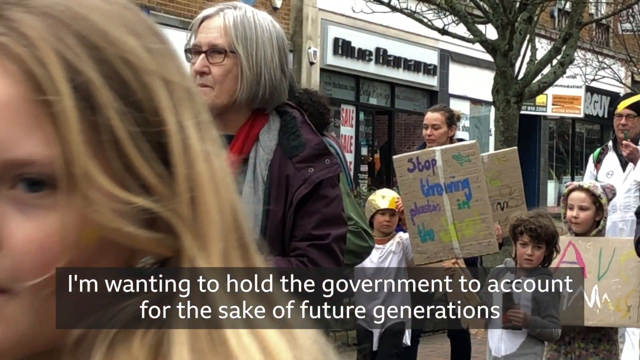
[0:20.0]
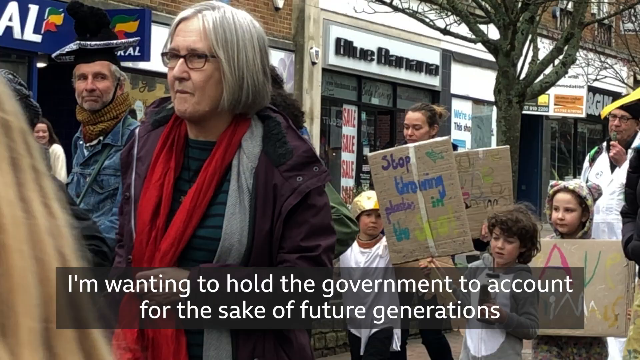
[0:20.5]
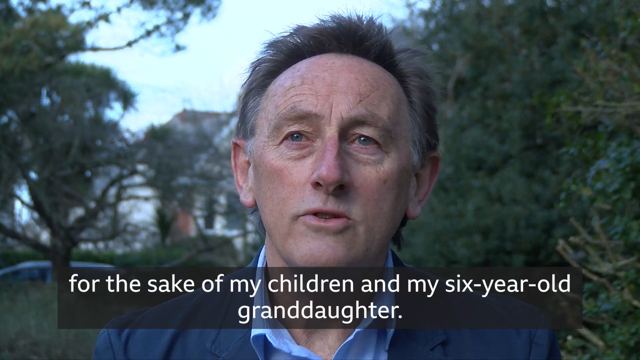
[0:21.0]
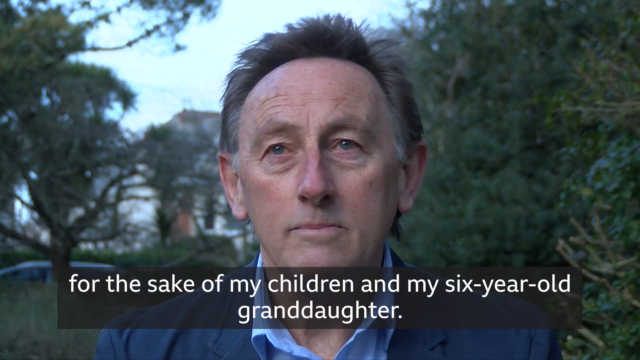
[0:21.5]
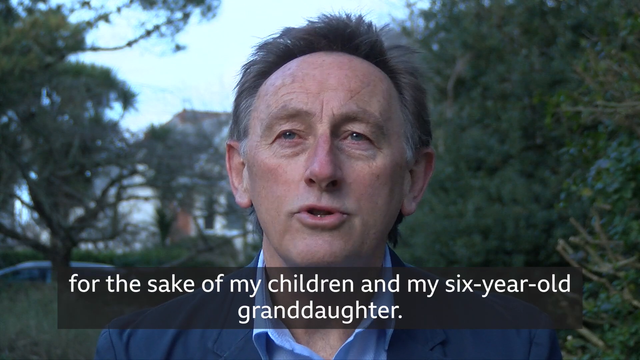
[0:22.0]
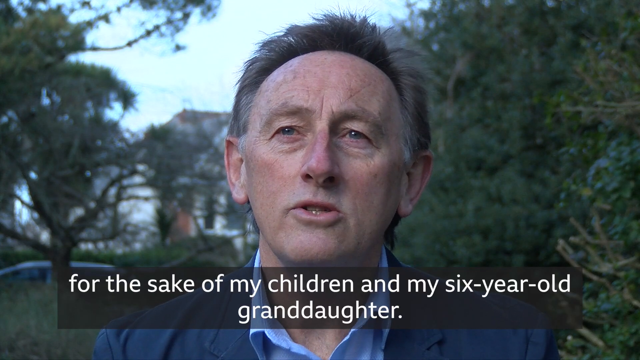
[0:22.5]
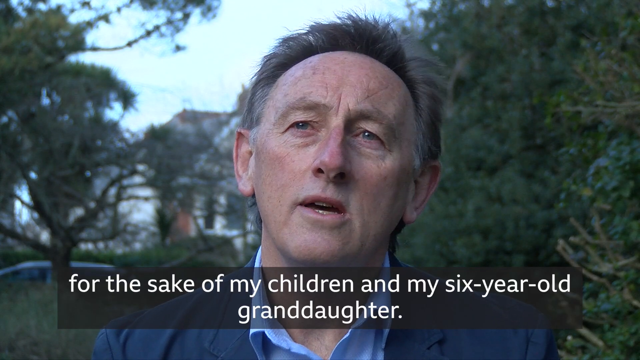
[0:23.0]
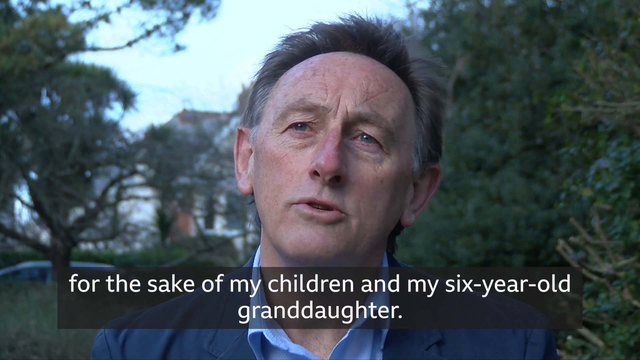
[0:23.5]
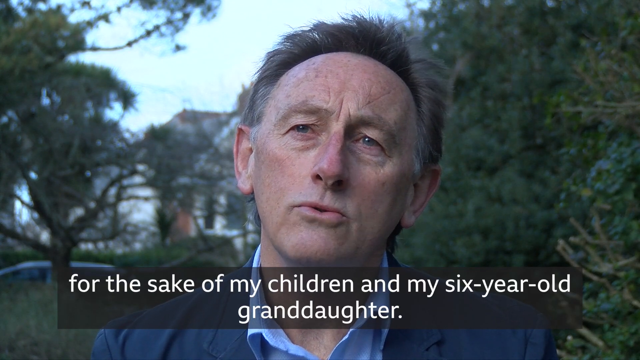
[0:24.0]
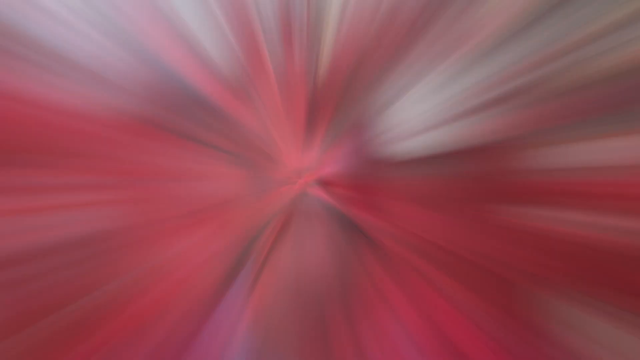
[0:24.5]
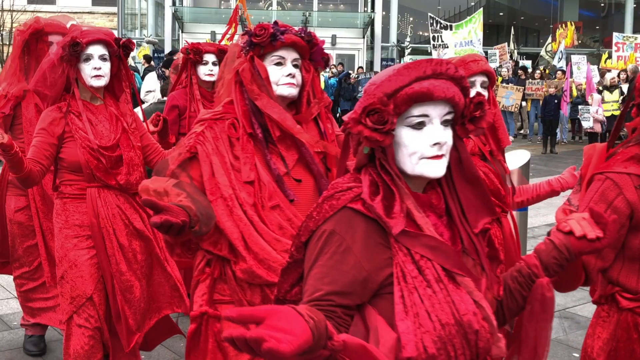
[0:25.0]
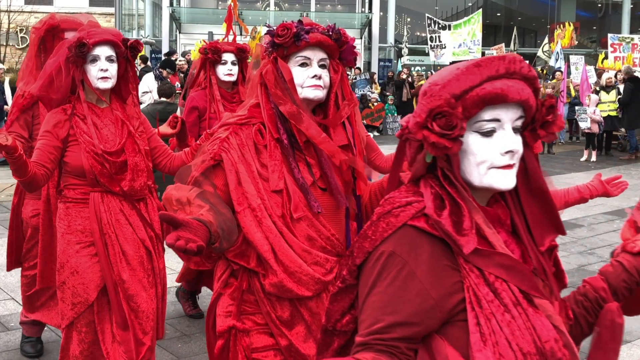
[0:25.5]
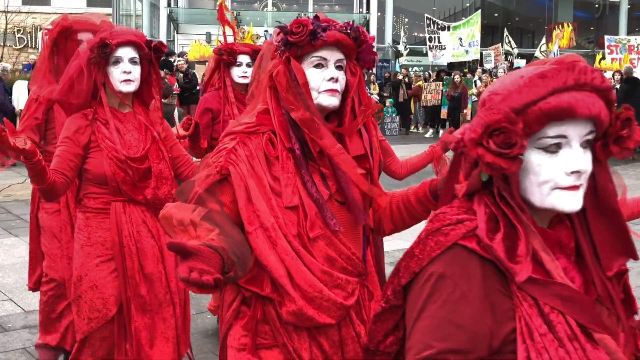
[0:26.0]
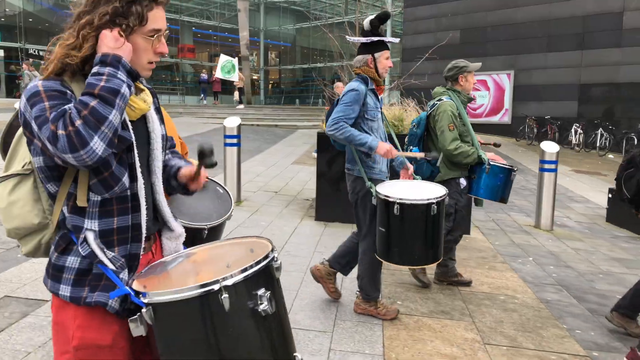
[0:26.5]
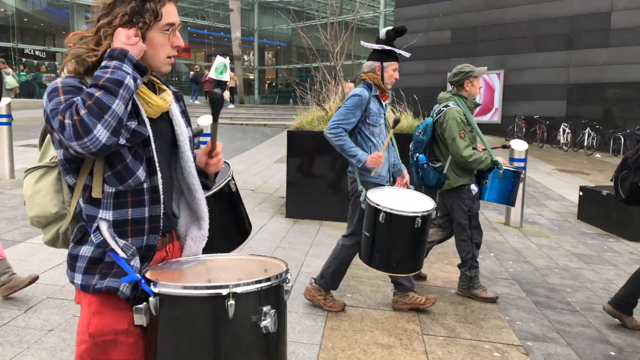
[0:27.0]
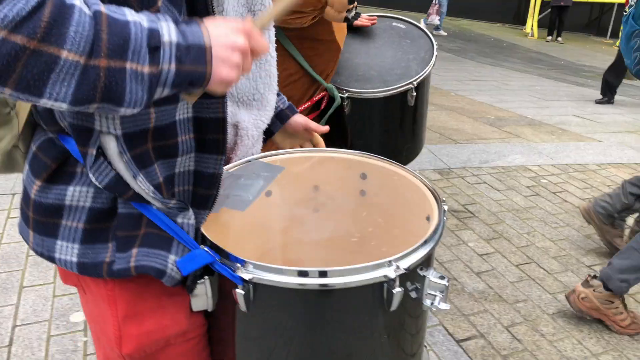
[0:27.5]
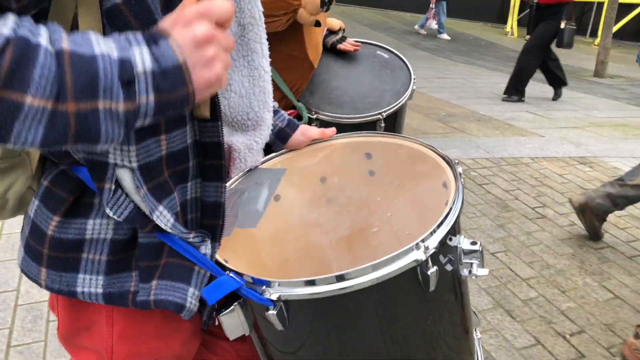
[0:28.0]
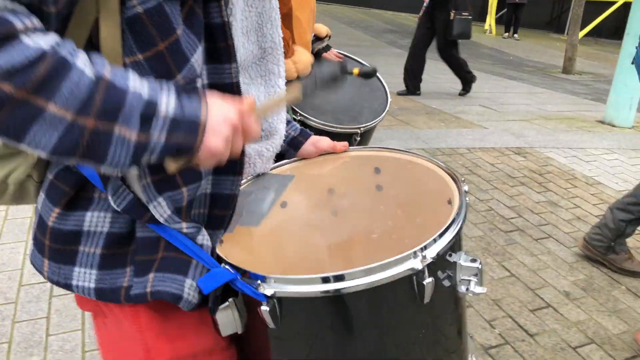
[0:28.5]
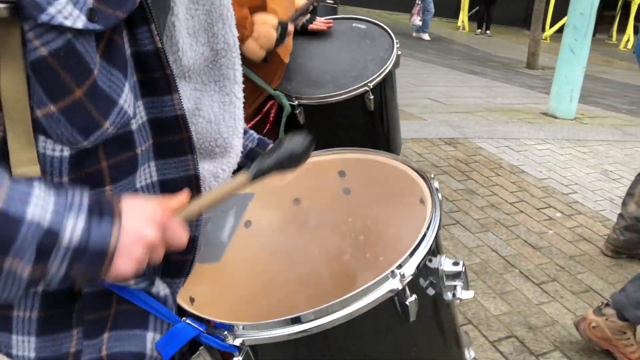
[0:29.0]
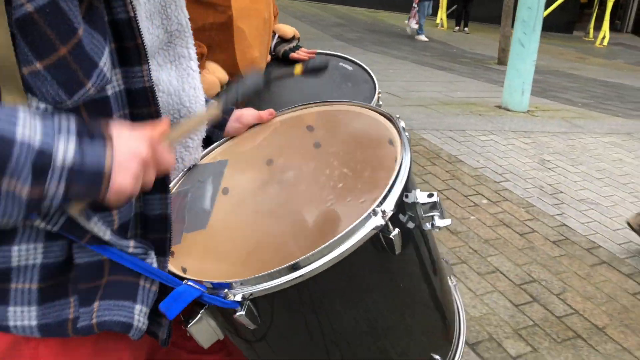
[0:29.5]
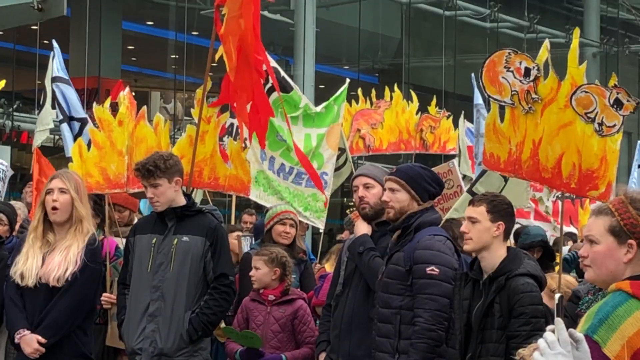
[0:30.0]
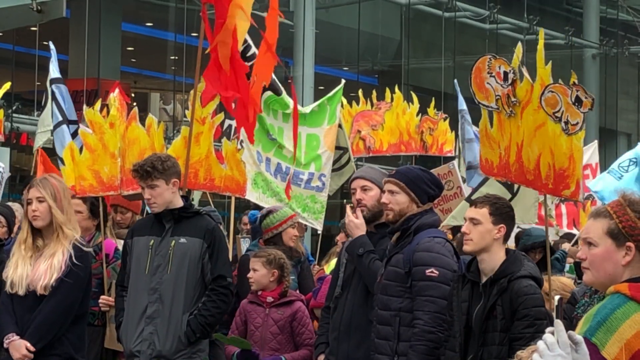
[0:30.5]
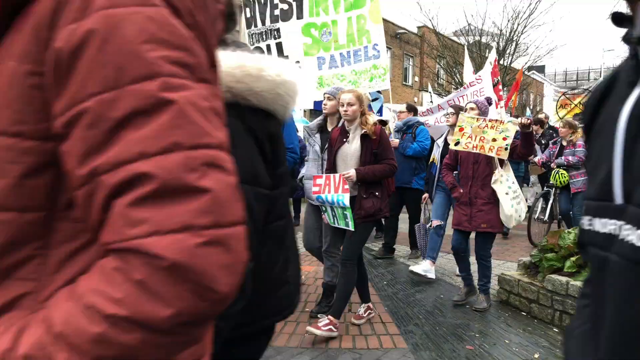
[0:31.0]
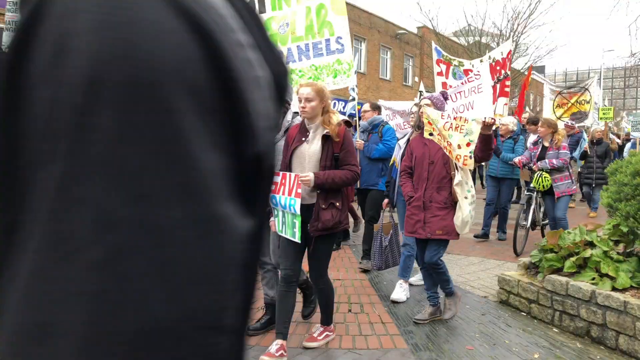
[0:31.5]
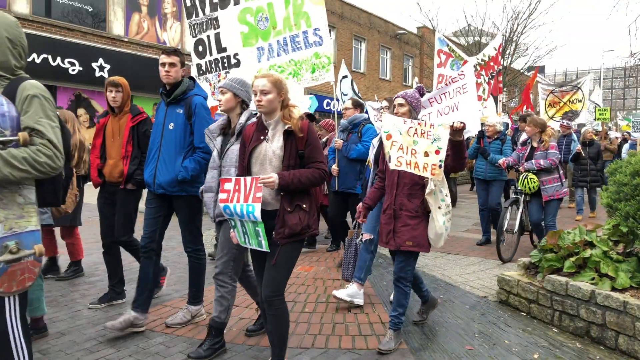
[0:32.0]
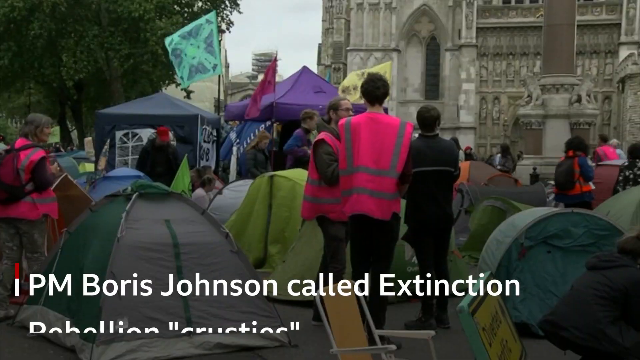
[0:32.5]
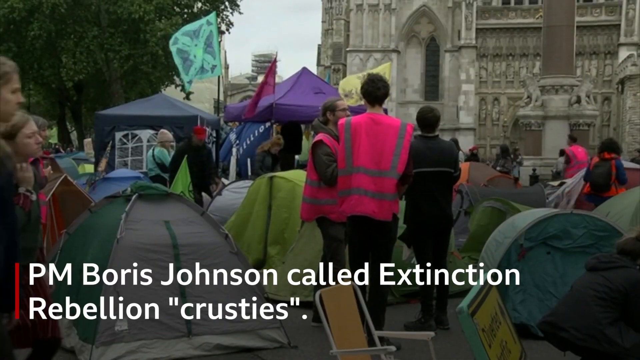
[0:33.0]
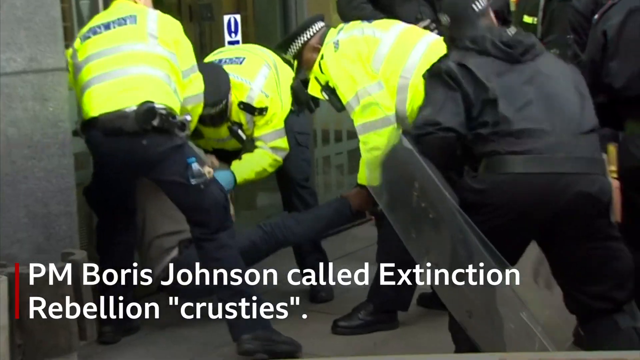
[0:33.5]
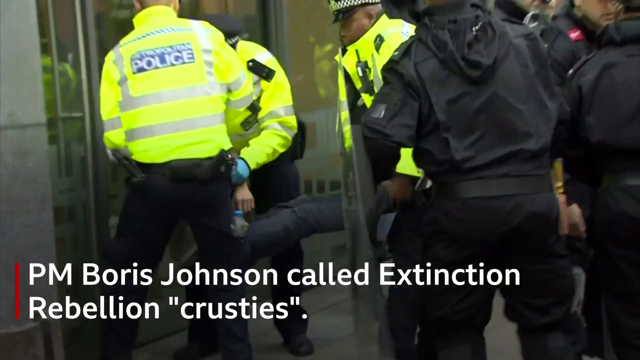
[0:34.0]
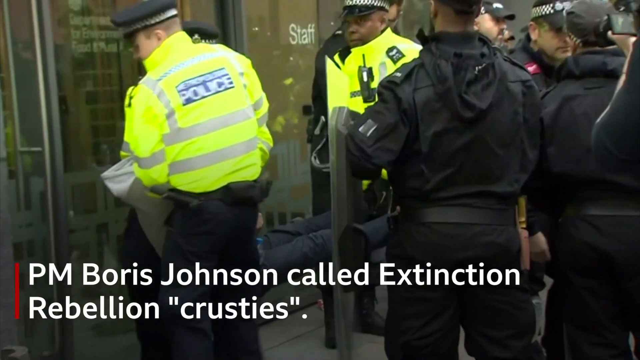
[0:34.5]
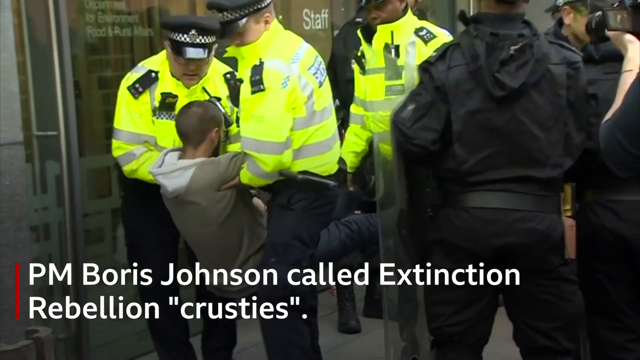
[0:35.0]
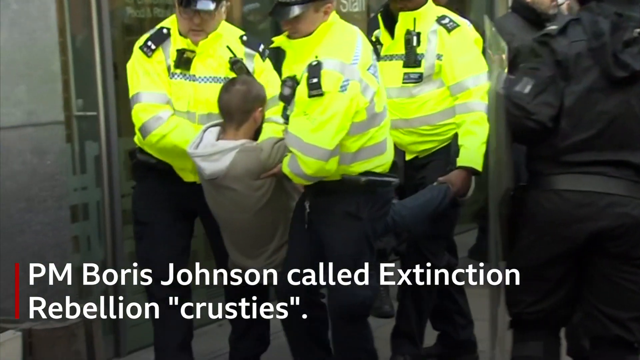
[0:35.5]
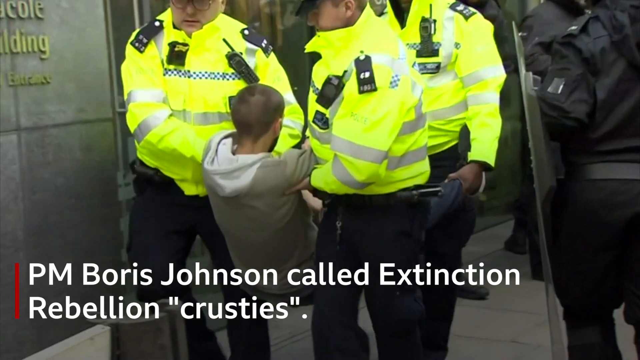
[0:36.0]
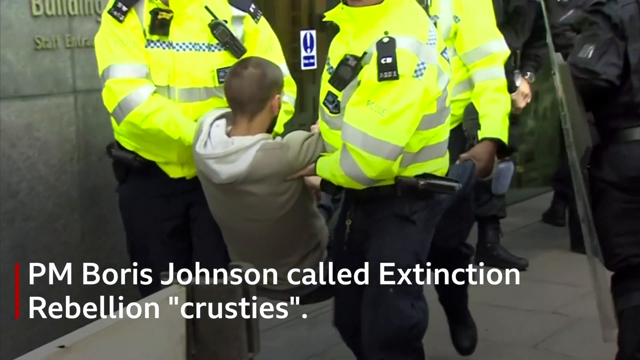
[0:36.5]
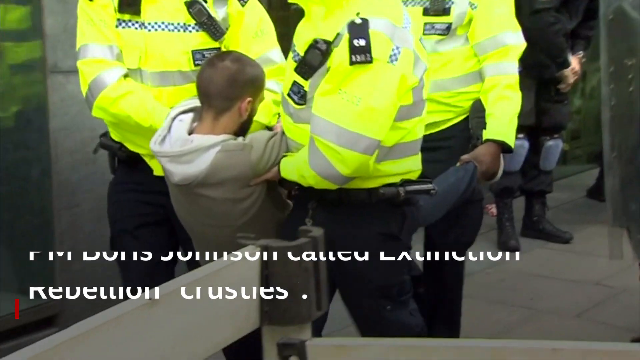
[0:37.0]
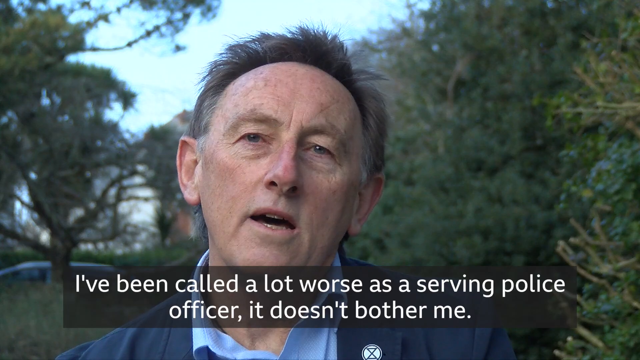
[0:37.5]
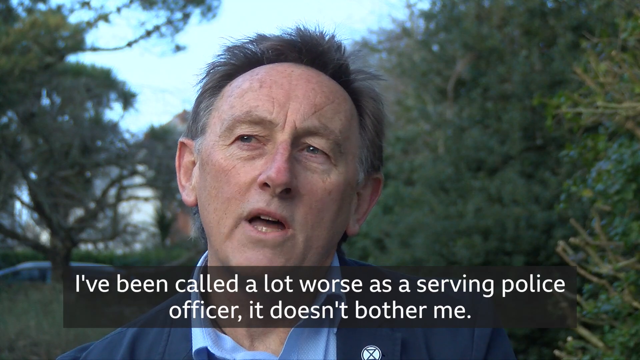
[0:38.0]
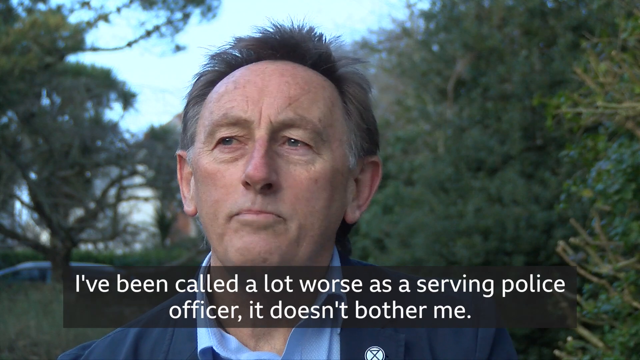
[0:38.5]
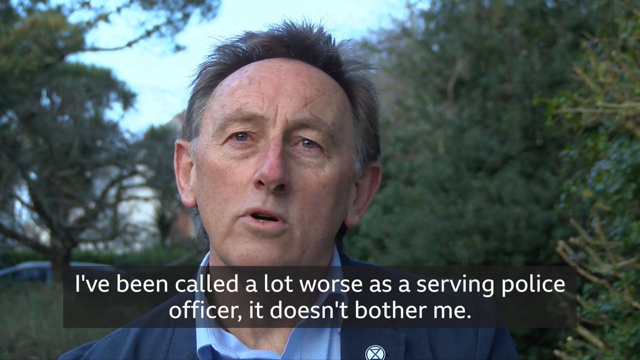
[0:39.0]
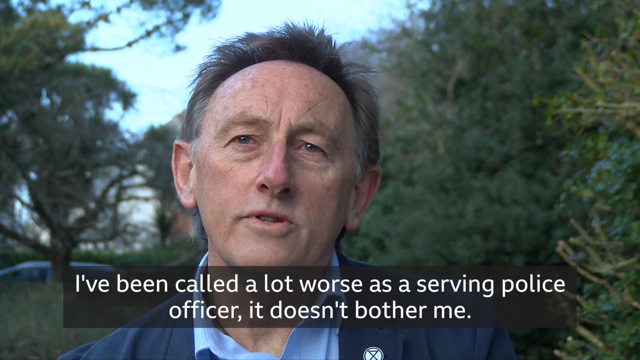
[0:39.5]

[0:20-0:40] Protesters walk along the streets. A man with short blonde hair speaks, with lots of trees with dark green leaves behind him. Some women with their faces painted white wear red outfits from head to toe, including headgear and gloves; the outfits look like togas and have long sleeves. They walk limply with their hands held out. Next, some men drum on large drums strapped to their waists. Some people stand with signs that look like flames of fire in orange and gold. All of the people wear cold-weather clothing such as hoodies and jackets as they quietly walk along in the protest. Three police officers in yellow police vests grab a man by his hands and legs and lift him up, and they succeed in carrying him away as he protests quietly. Throughout the video, the news story transcription appears in white text across the bottom of the screen.